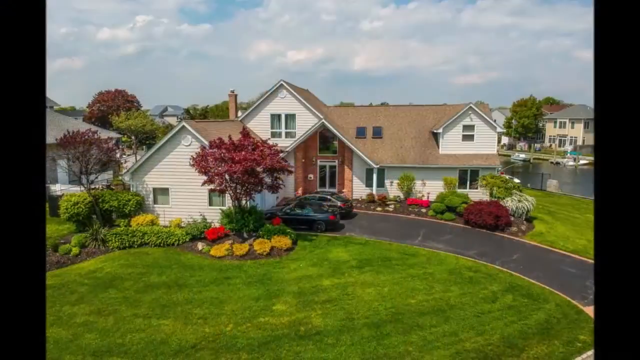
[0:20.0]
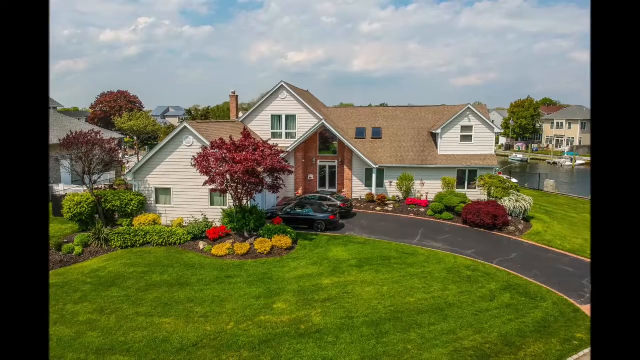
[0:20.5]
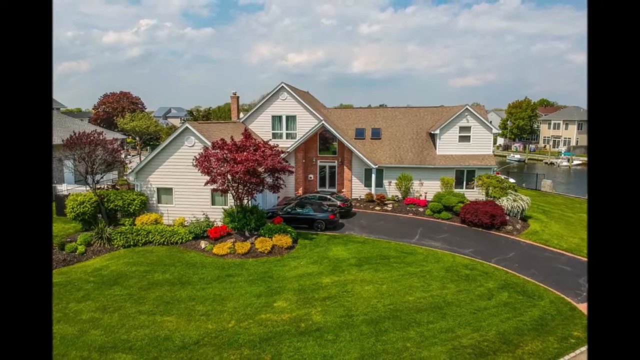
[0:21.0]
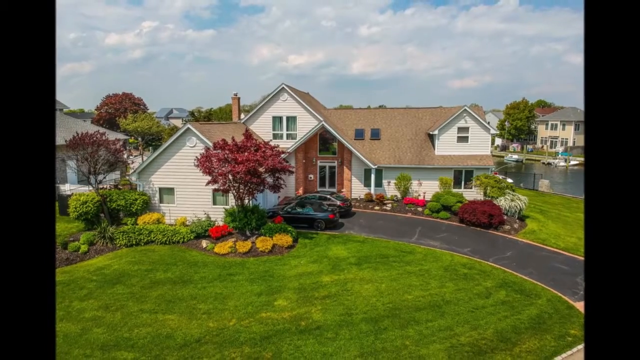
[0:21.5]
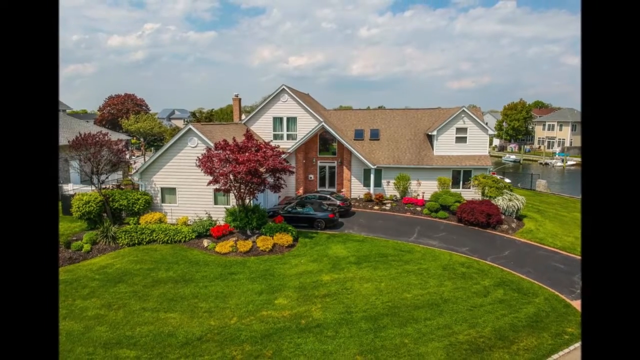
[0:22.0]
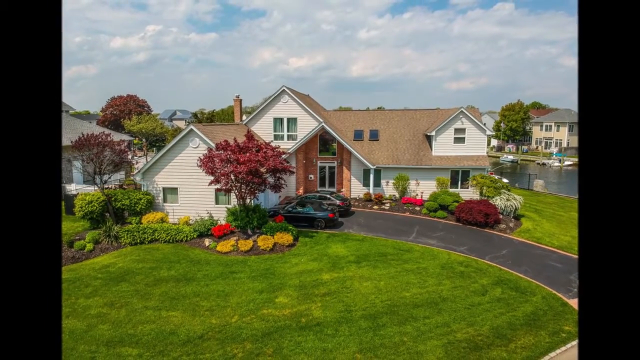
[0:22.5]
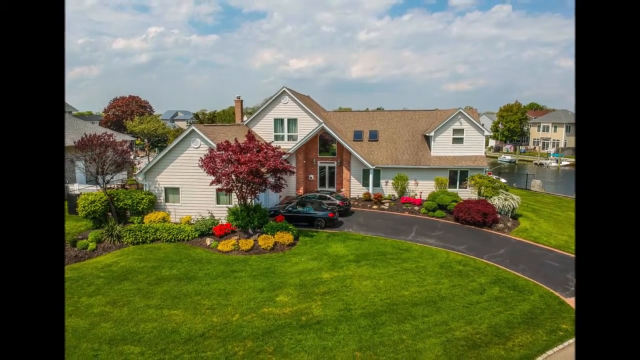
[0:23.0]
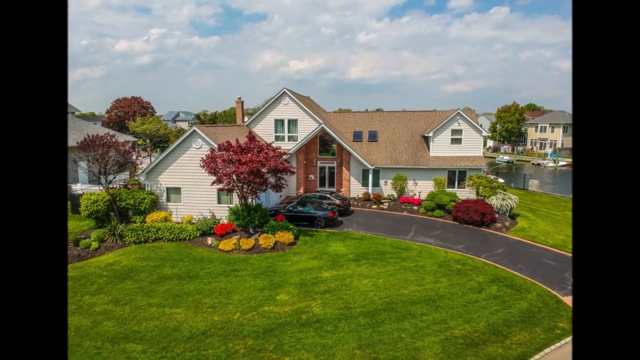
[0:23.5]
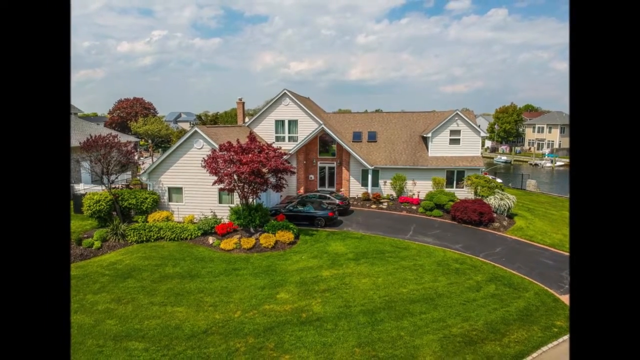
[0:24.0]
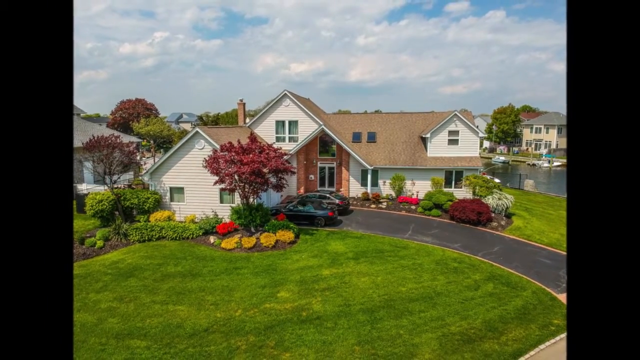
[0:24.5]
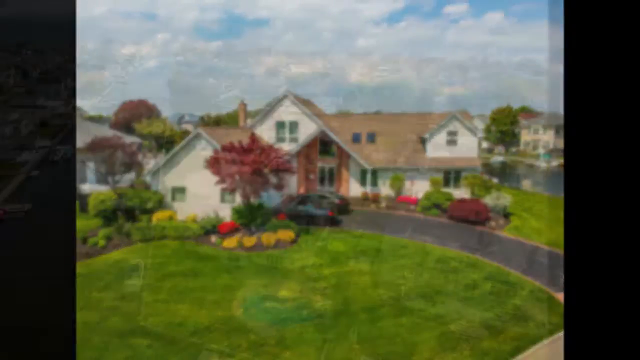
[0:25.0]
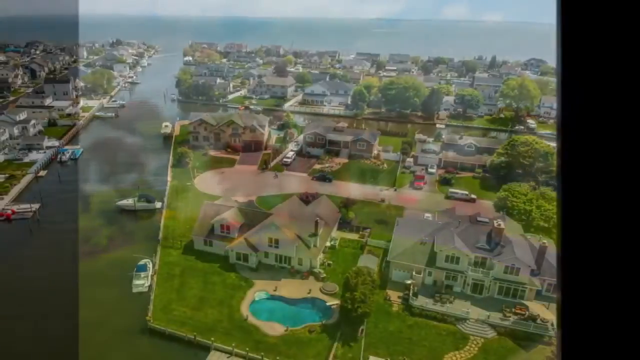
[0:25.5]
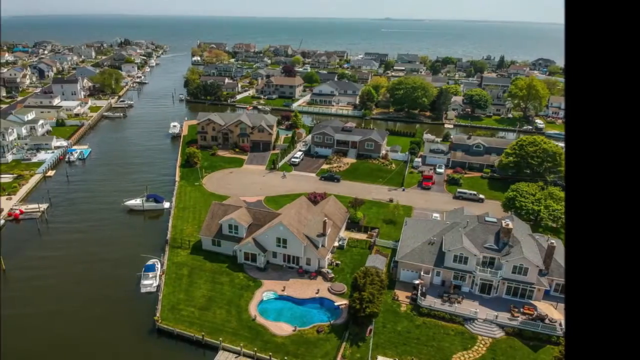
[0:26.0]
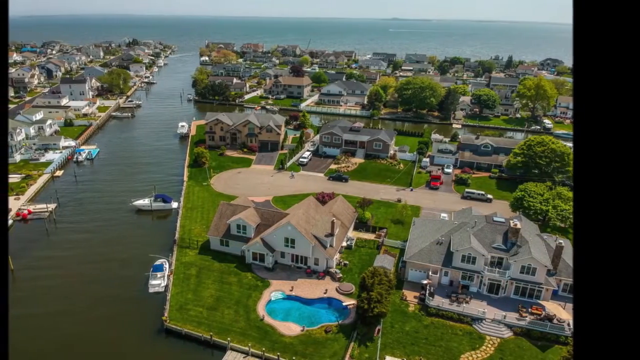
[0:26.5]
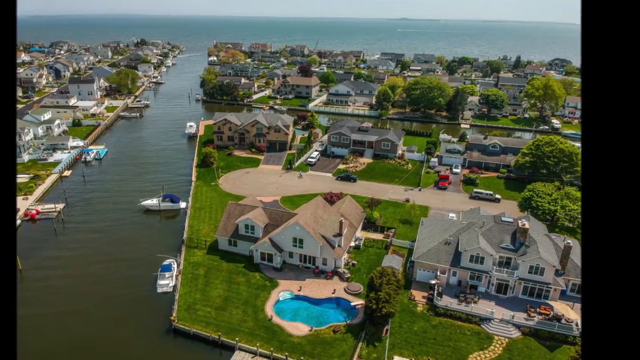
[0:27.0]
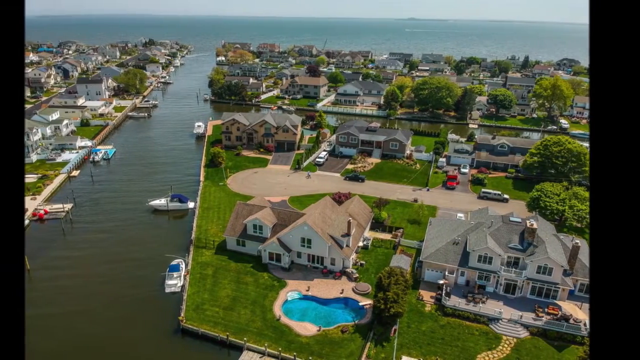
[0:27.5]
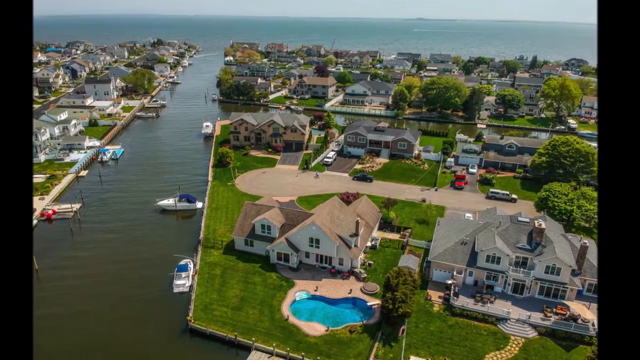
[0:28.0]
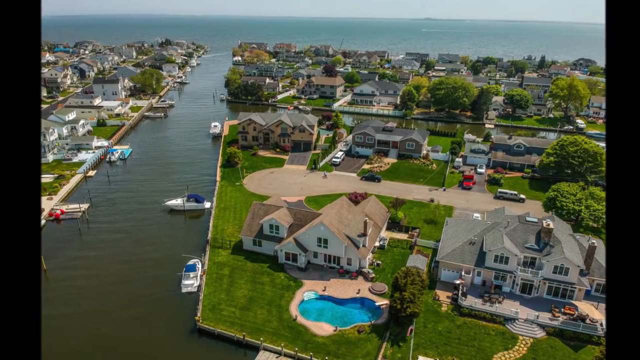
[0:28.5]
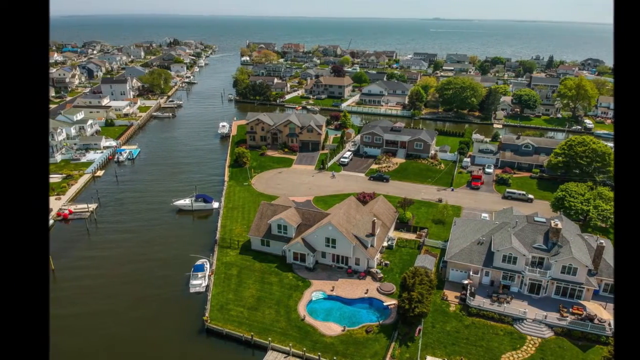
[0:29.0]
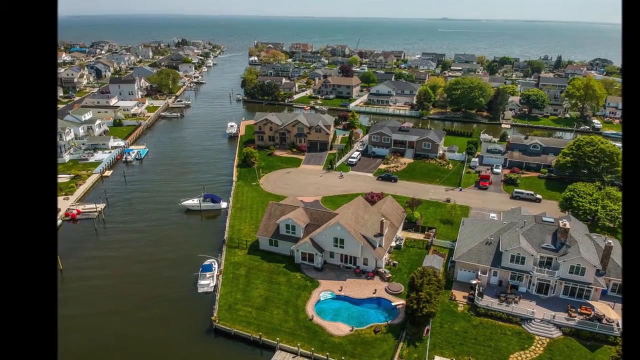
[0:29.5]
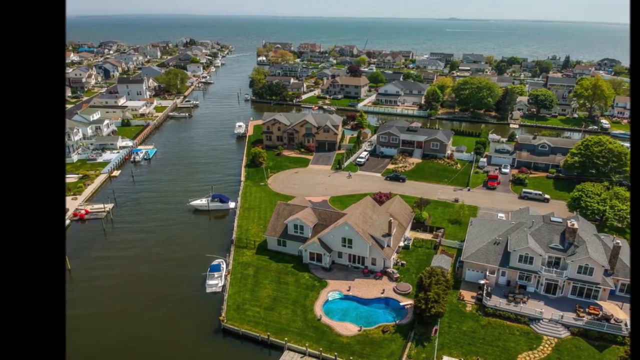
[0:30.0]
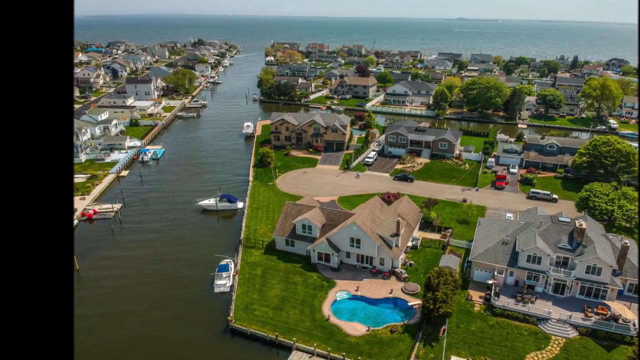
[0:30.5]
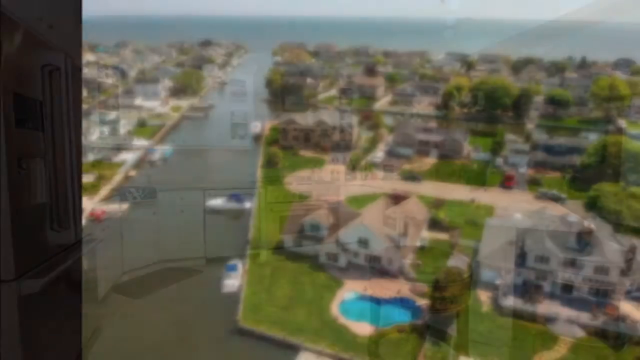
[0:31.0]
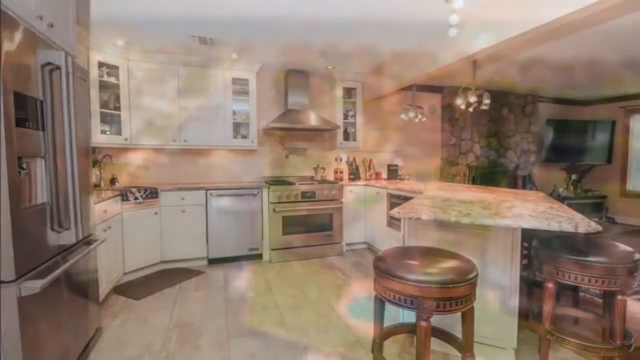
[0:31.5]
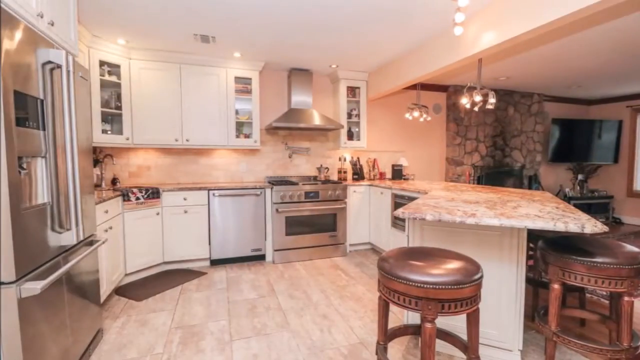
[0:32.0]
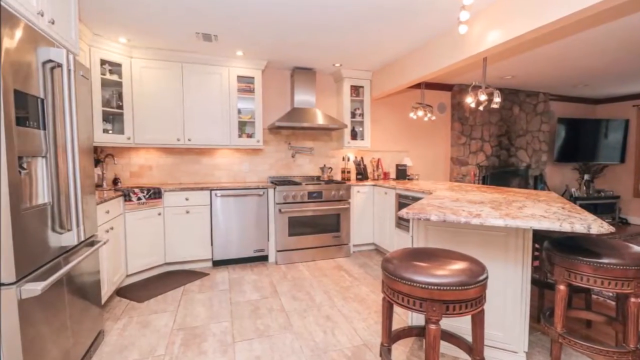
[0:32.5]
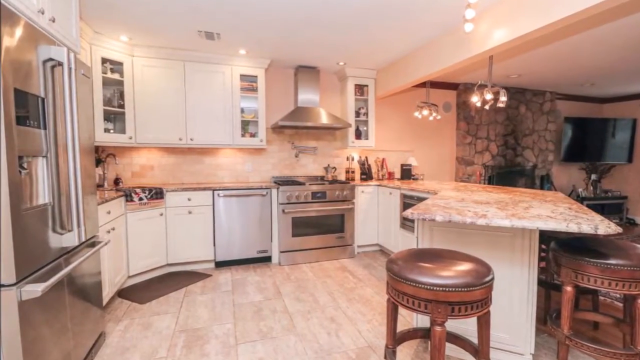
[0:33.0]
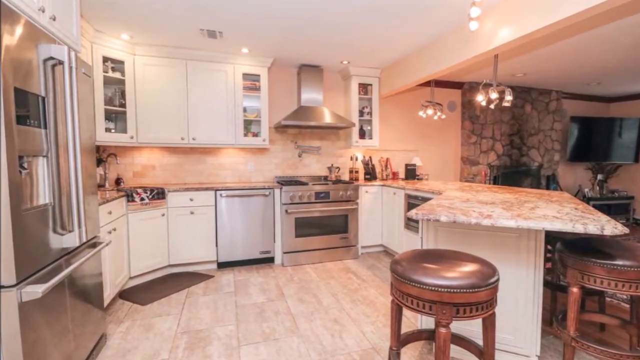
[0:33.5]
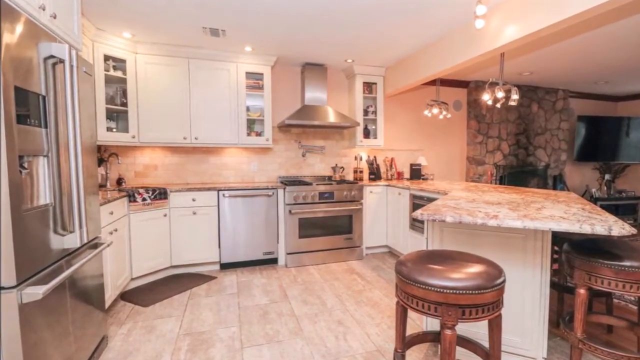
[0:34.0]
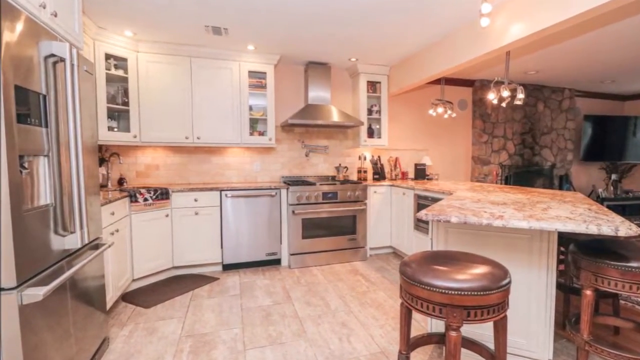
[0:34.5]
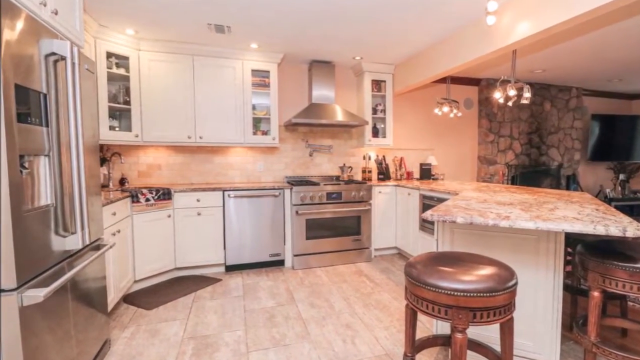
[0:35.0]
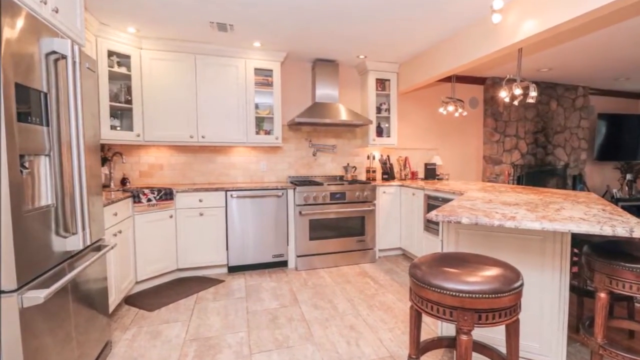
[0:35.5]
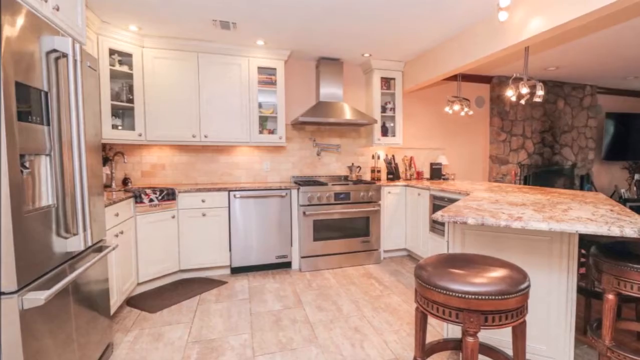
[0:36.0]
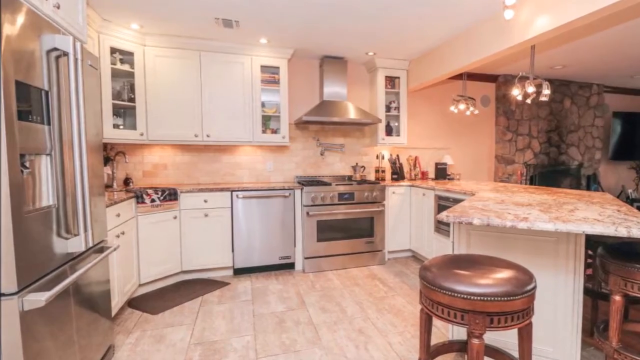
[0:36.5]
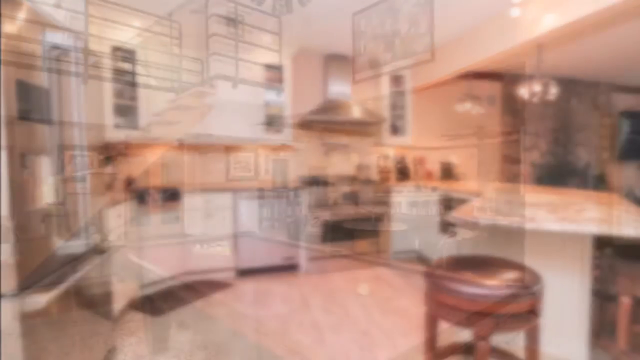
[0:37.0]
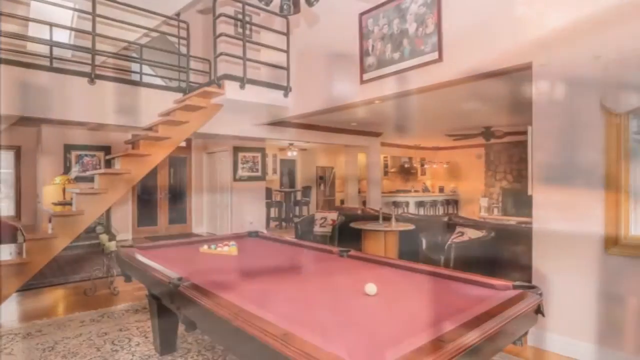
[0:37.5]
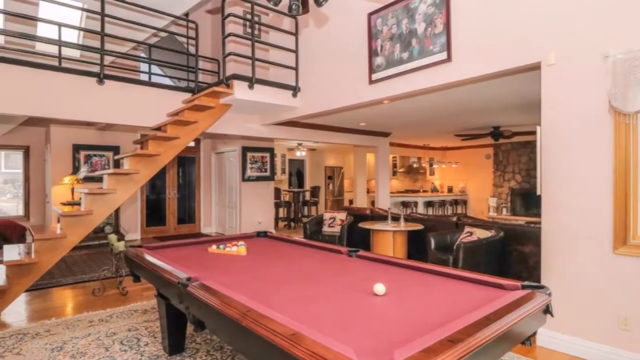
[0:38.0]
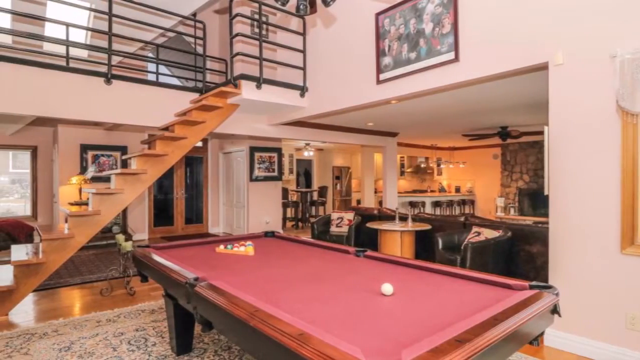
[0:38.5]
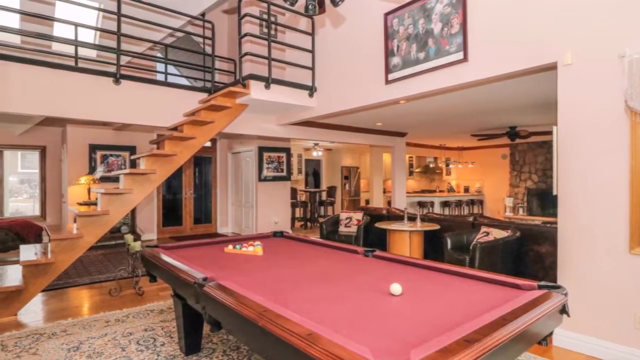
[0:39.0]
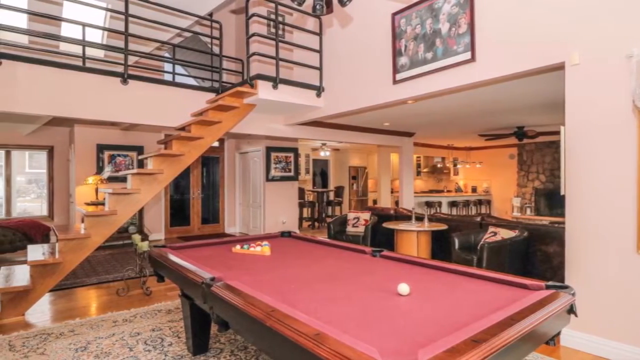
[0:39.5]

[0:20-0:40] Outside a large house, a big driveway leads up to it, with two cars parked in the driveway. There is lots of foliage outside: red trees, green trees, and green bushes and shrubs. Other houses are visible in the distance. The camera very slowly zooms out to show a much larger area, with a body of water and boats docked along it. Many of the houses in the area seem very large, with quite big backyards and swimming pools. The video then moves inside a house to a very luxurious-looking kitchen with a big fridge freezer, a big oven and a white marble worktop. Just past the kitchen is an area with a TV on the wall and some stone decoration on the wall. Next comes a room showing the stairs that lead upstairs; it is possibly a game room, as there is a pool table in the middle of it.